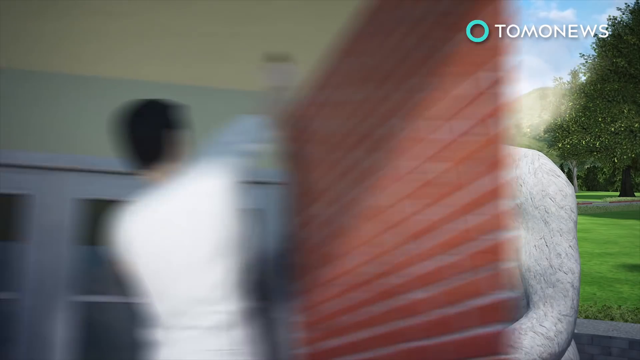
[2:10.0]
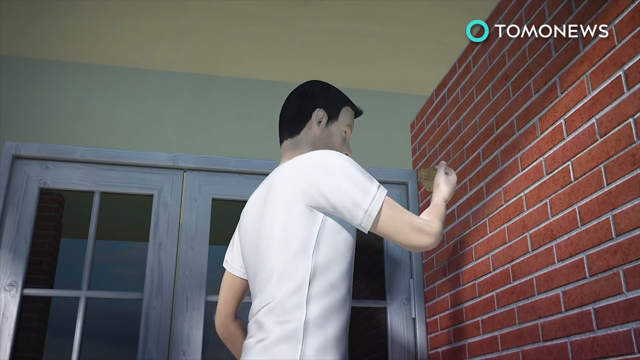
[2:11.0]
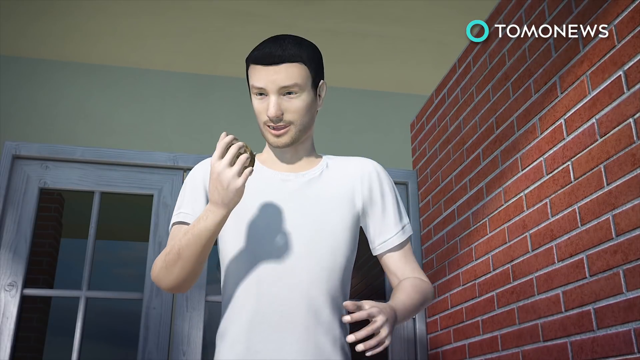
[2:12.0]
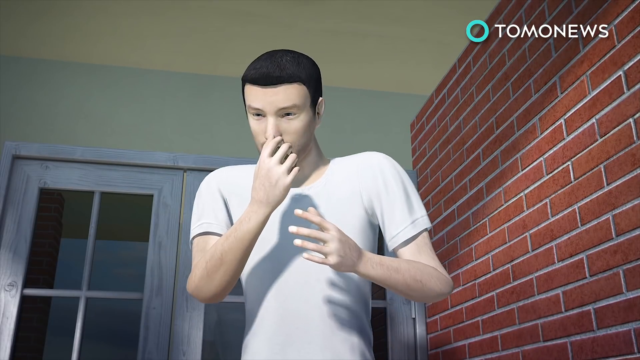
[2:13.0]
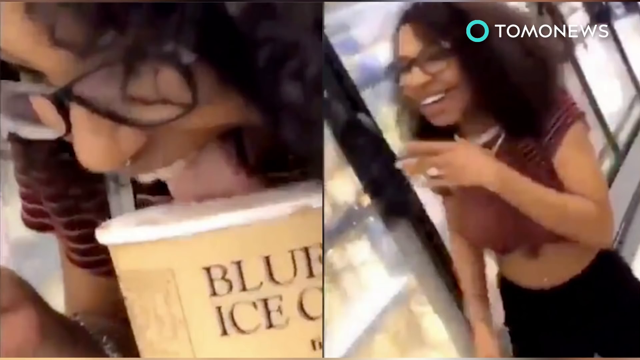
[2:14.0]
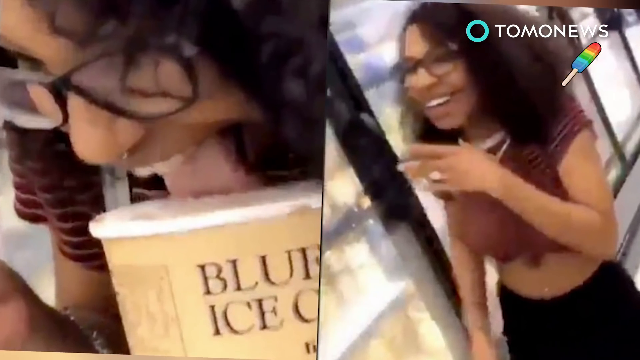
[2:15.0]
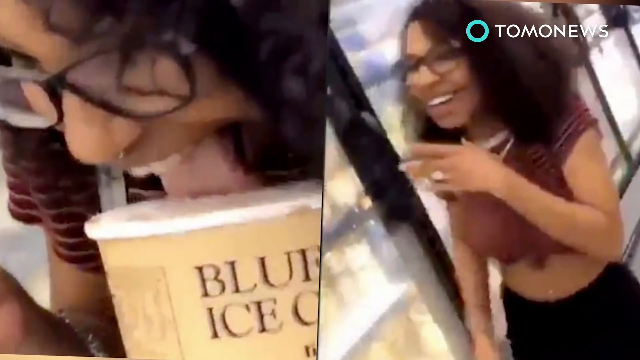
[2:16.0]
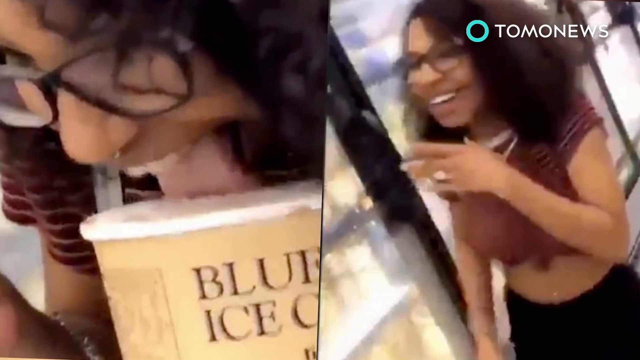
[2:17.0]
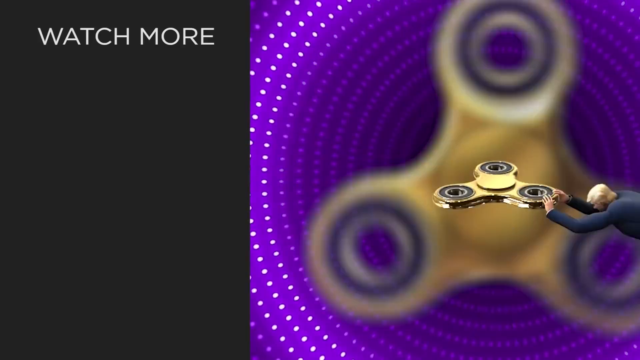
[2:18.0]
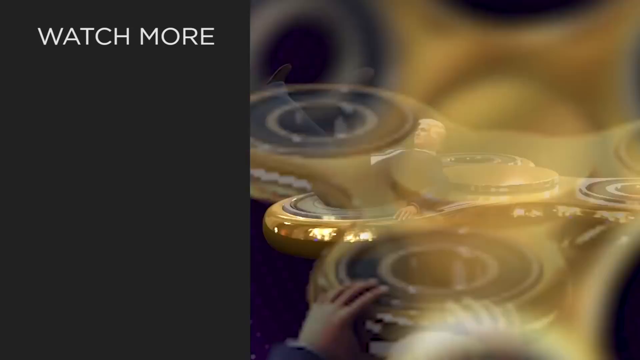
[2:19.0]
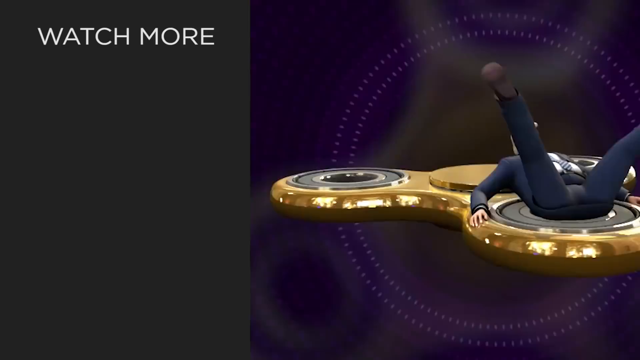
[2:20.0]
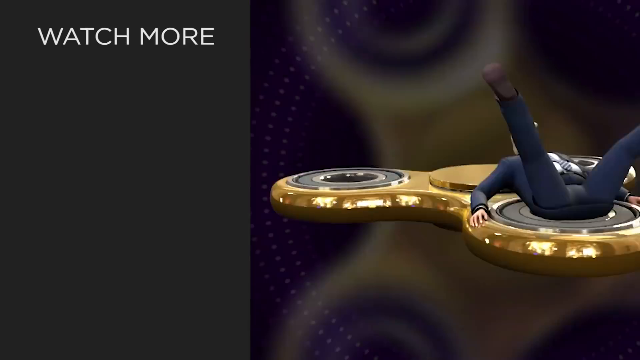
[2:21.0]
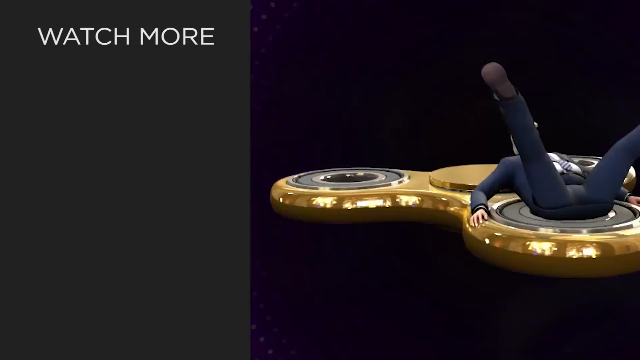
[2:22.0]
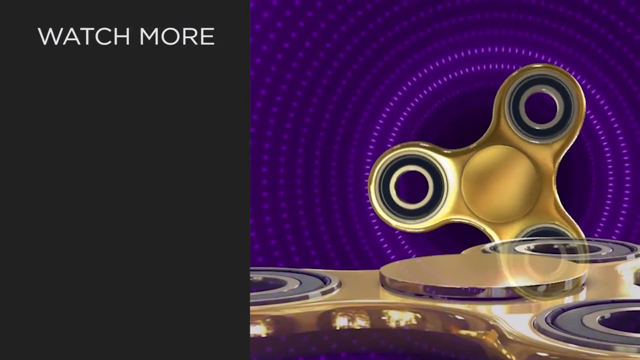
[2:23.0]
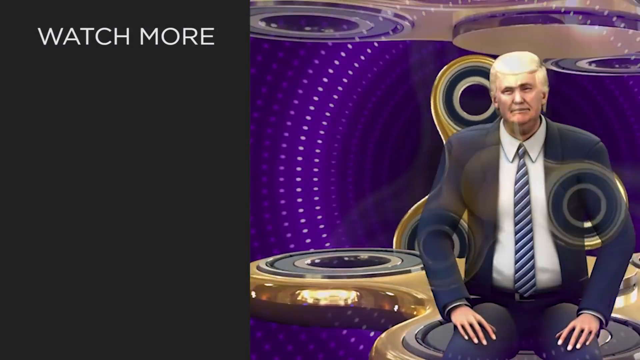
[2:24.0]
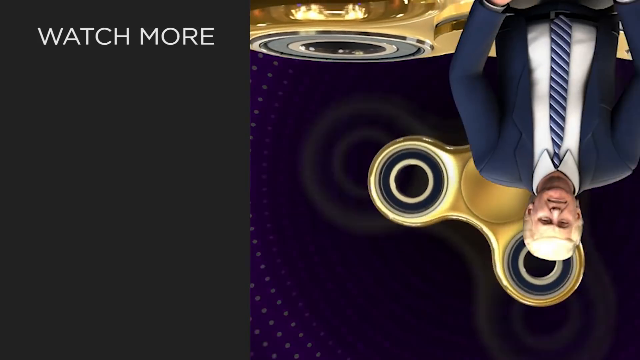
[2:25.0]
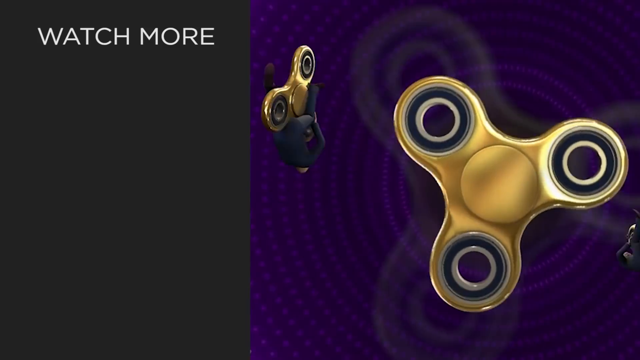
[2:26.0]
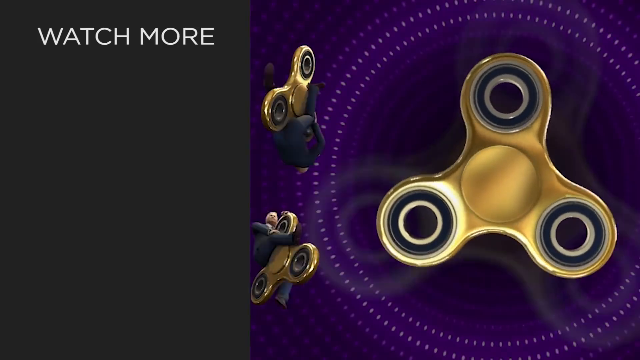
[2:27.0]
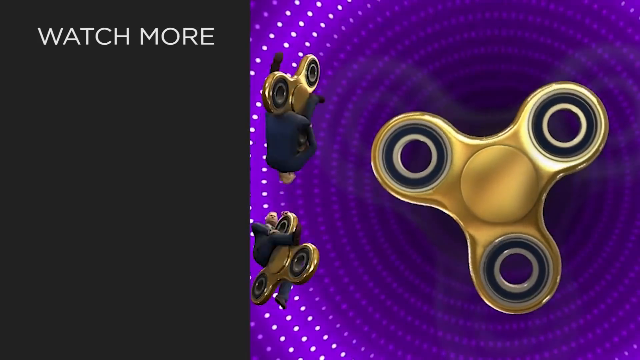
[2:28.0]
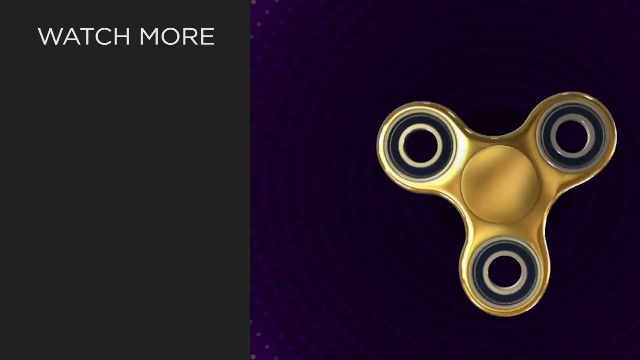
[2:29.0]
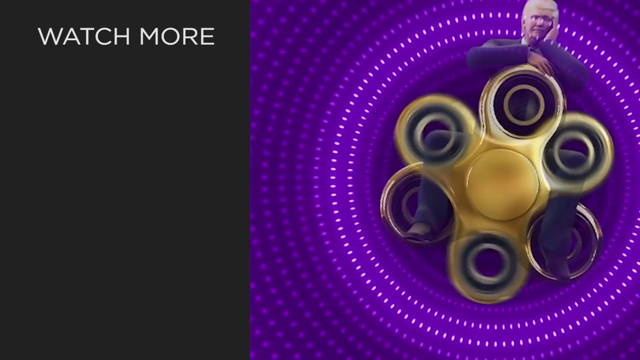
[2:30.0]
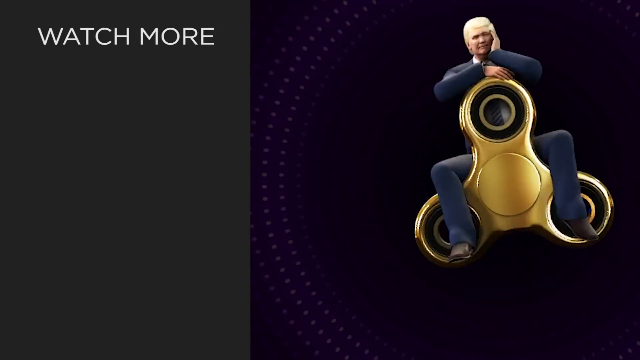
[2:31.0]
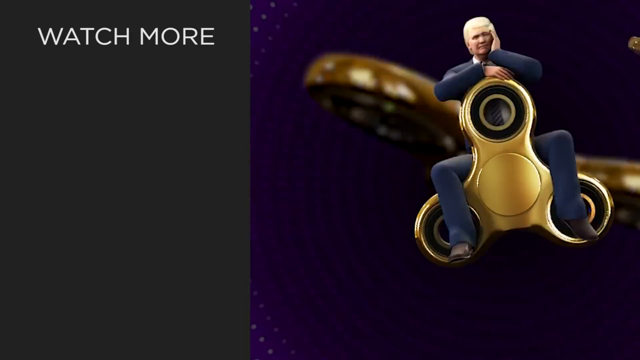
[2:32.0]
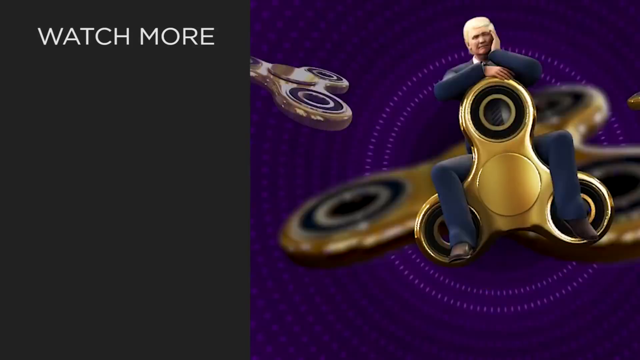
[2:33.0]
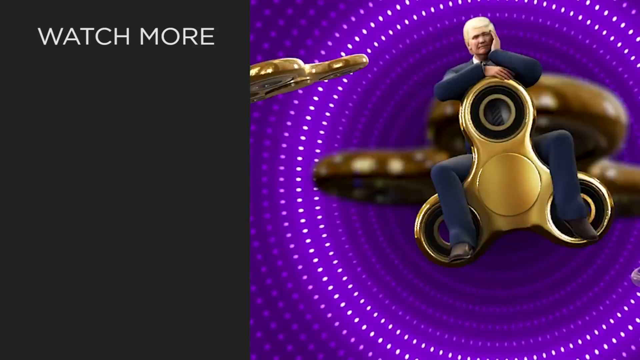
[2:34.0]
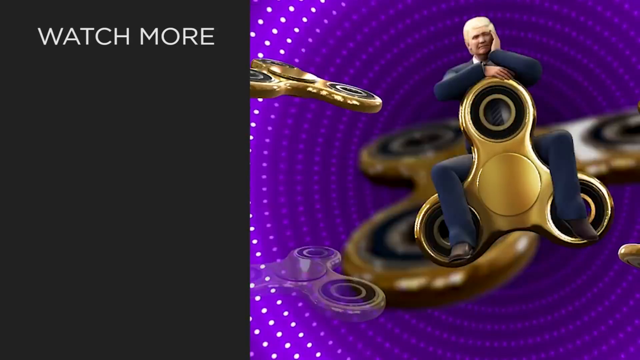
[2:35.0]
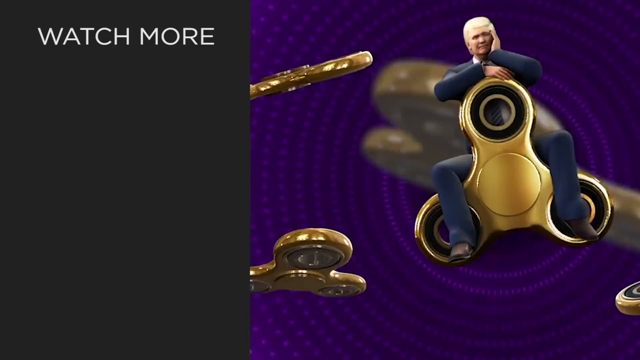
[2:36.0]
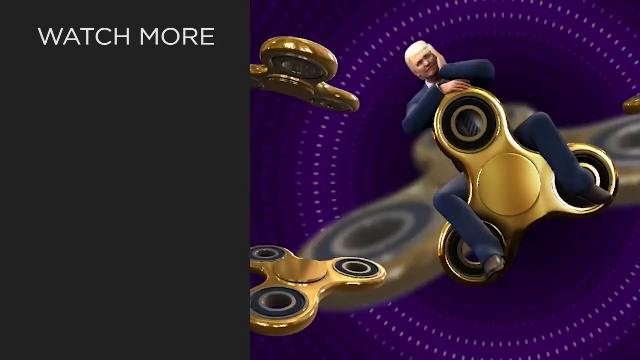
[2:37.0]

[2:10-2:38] The lady is shown as the suspect in the ice cream licking seen in her video, arrested for licking ice cream. The man and woman are still watching the CCTV footage; then the woman stays in the CCTV room while the other goes out, and they seem to communicate through earphones, talking while in different spaces. In the store, a person wearing blue clothes holds an ice cream. Pictures of the lady licking the ice cream are going viral, and text above the images says "watch more."